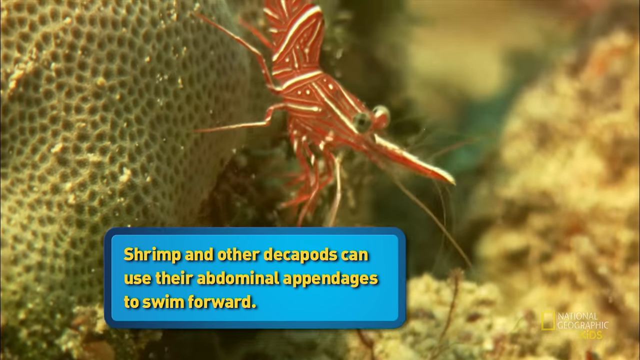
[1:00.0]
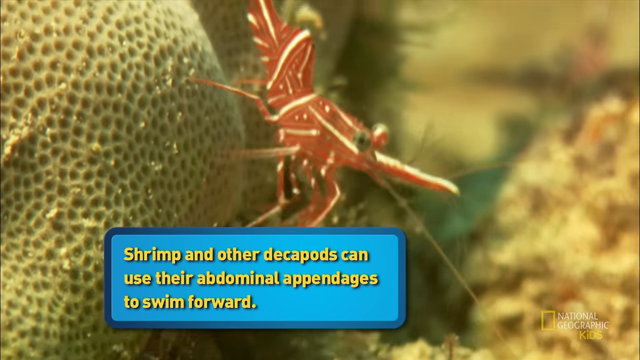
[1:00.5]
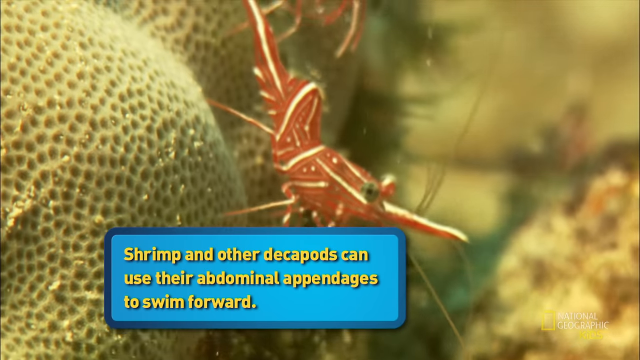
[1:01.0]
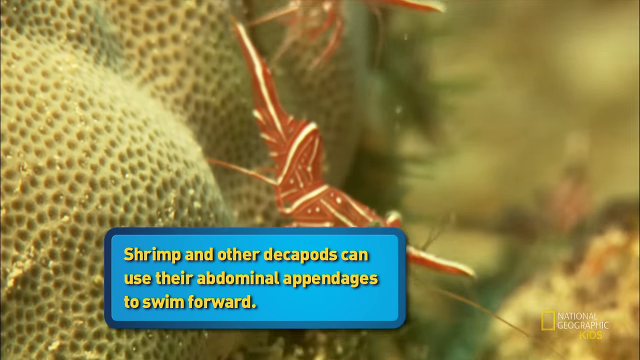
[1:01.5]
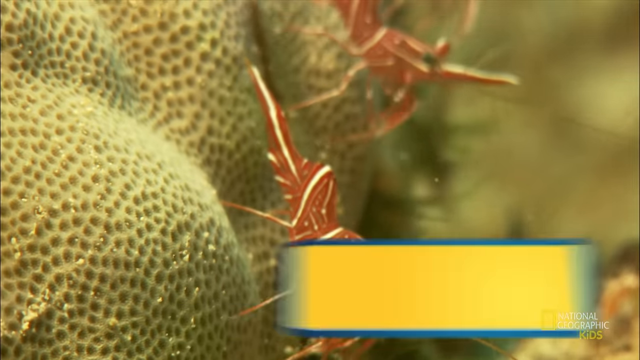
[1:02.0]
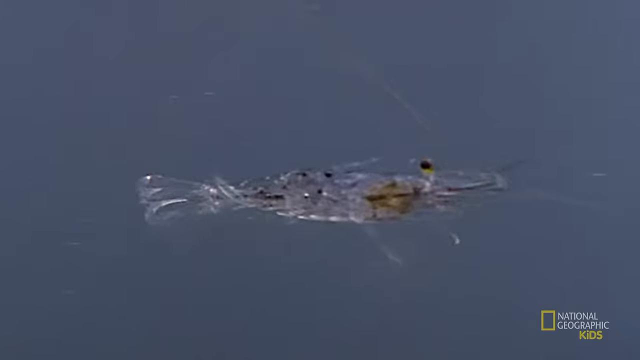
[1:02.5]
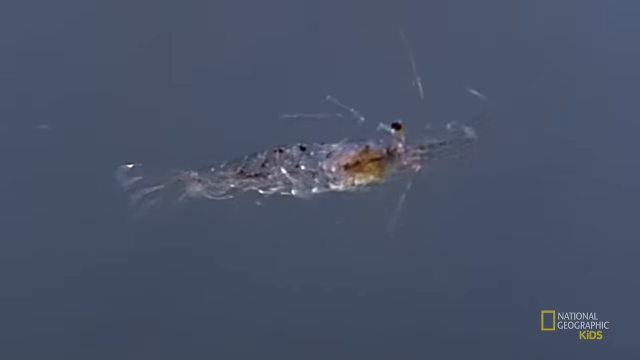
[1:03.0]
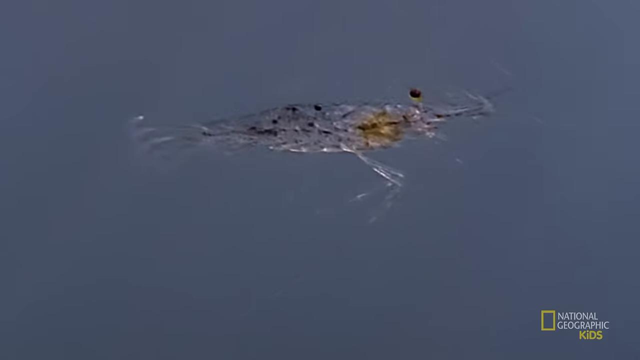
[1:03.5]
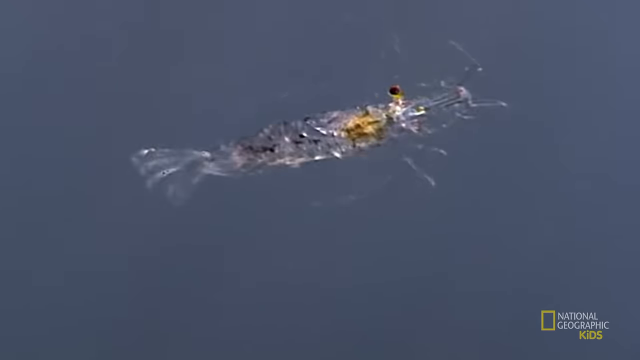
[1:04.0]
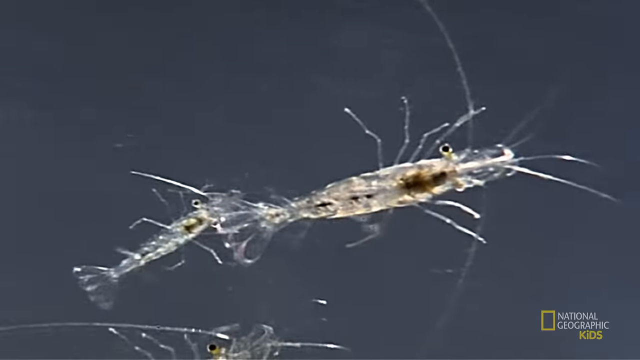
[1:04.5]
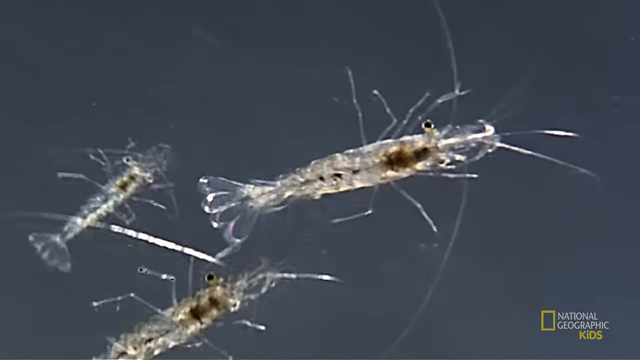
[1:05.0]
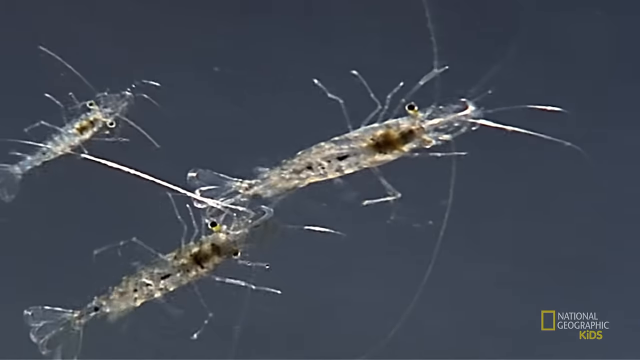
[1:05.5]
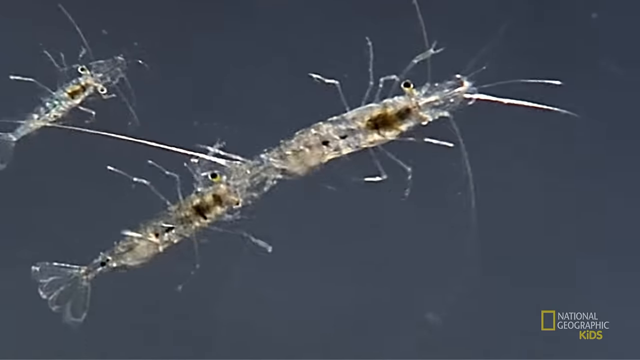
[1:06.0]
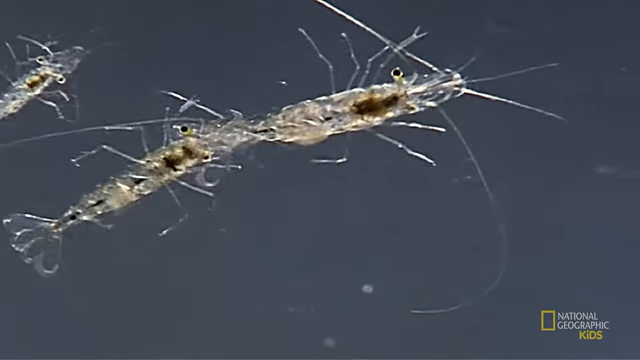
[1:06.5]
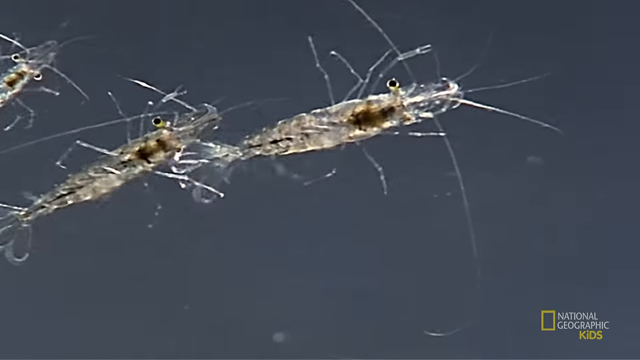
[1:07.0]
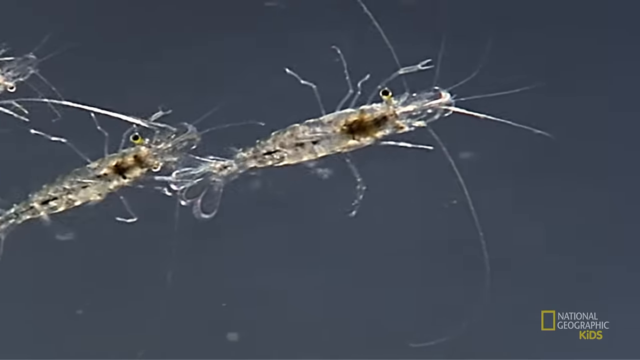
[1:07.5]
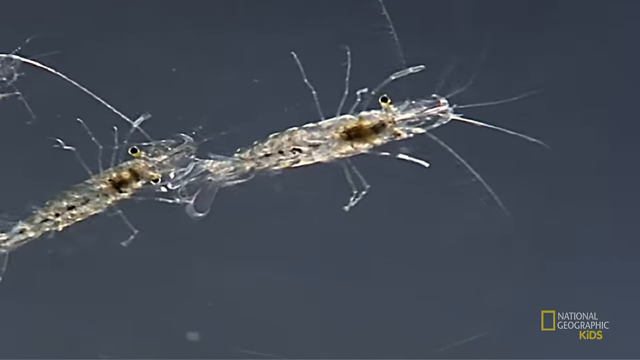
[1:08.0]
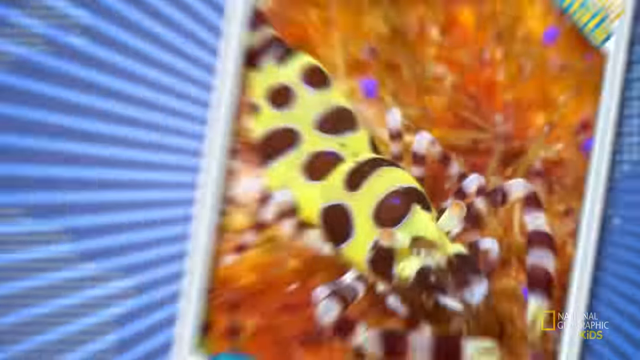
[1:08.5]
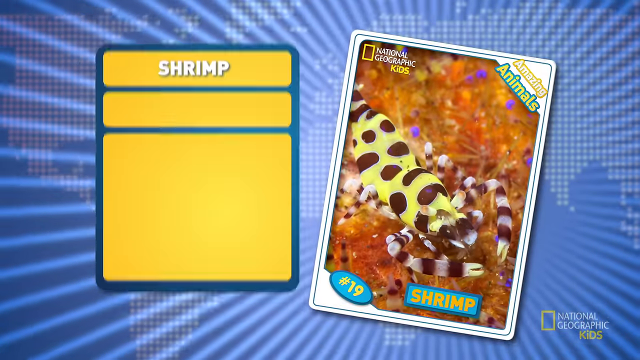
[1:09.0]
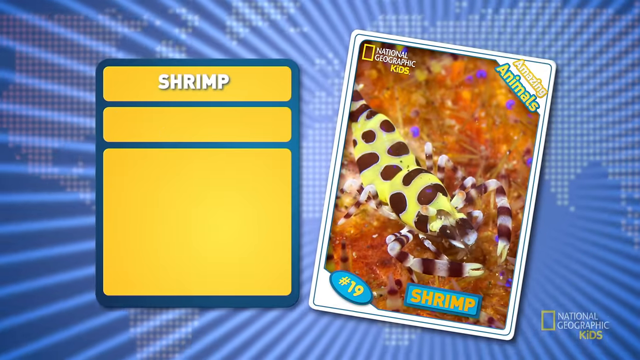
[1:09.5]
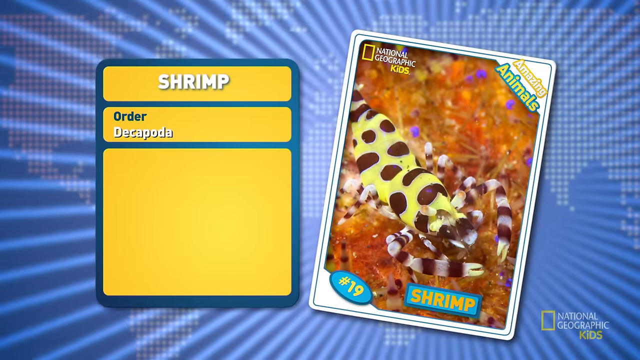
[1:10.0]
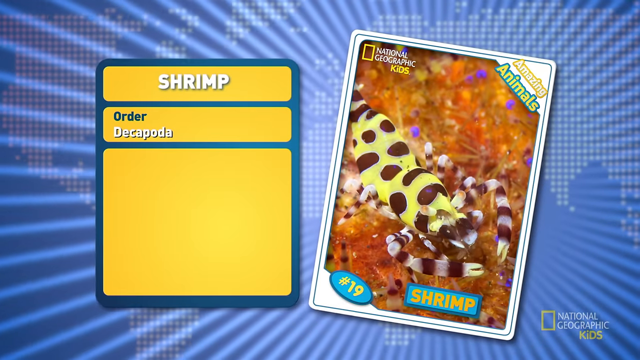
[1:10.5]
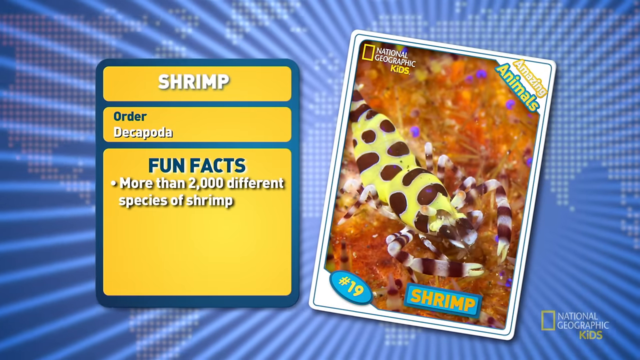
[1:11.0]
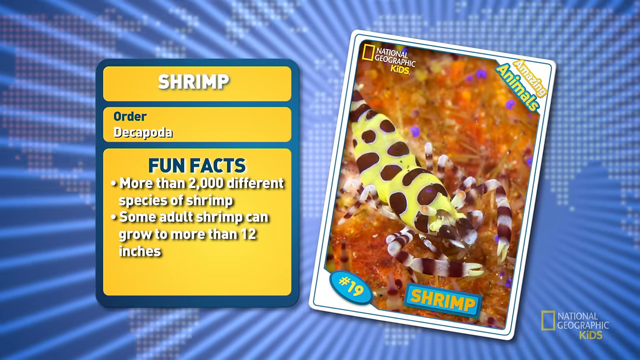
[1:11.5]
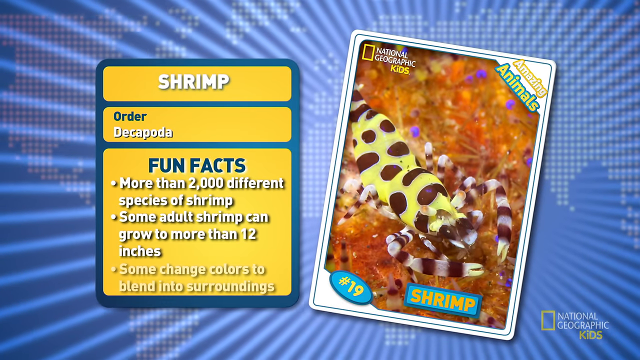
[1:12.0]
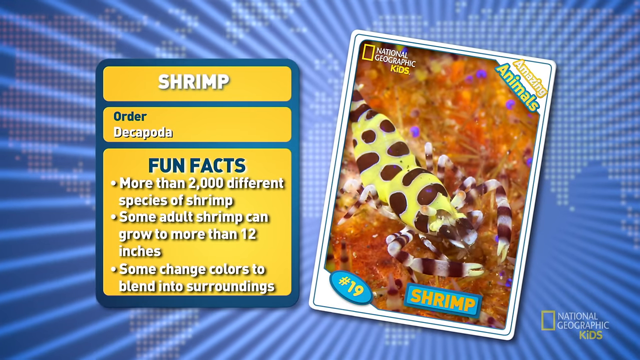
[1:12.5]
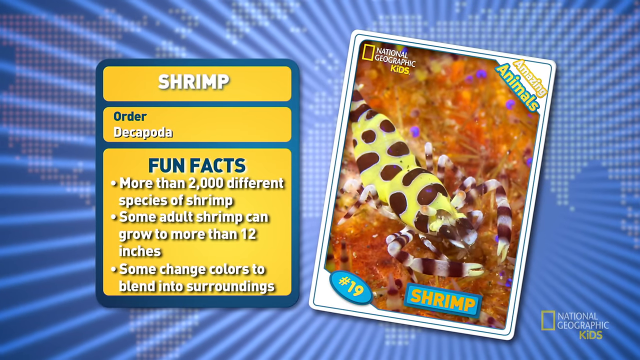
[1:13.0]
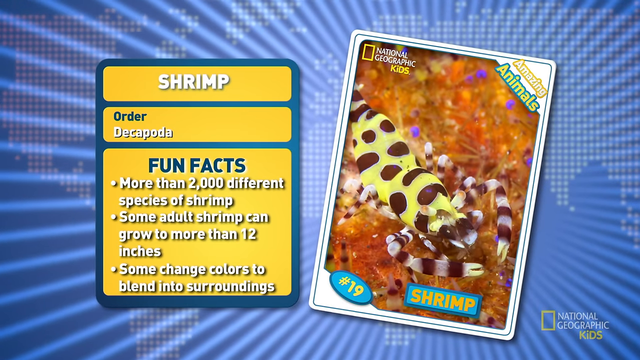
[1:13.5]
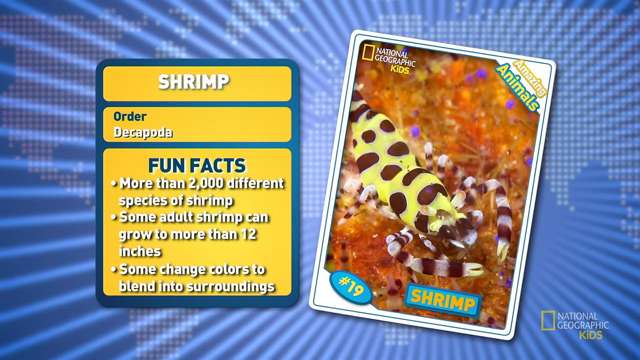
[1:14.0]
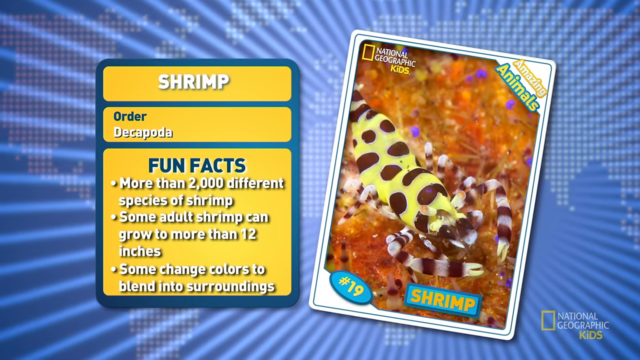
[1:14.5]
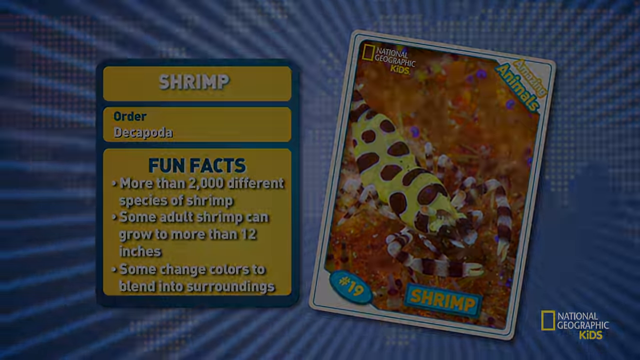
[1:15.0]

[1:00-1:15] More translucent shrimp appear, almost looking like insects. They are light in color with black splotches and float in the water just above the ocean floor. Something black is visible within them, probably the heart. Their eyes hang off the side rather than being encapsulated like the bug eyes of the orange crustacean-looking ones. The two orange crustacean-looking creatures walk rapidly up and through another type of amoeba whose surface has a large number of indentations. Both kinds look like they are searching for food, the crustaceans on the floor and the translucent ones in the water.